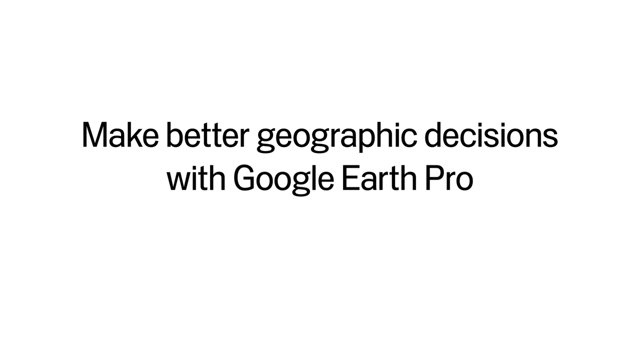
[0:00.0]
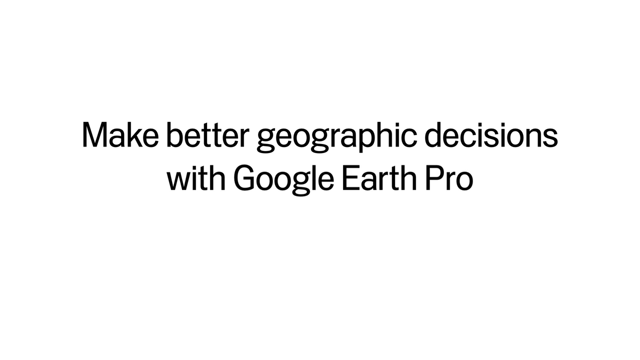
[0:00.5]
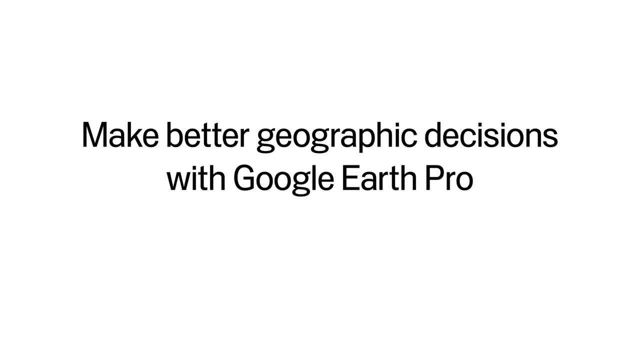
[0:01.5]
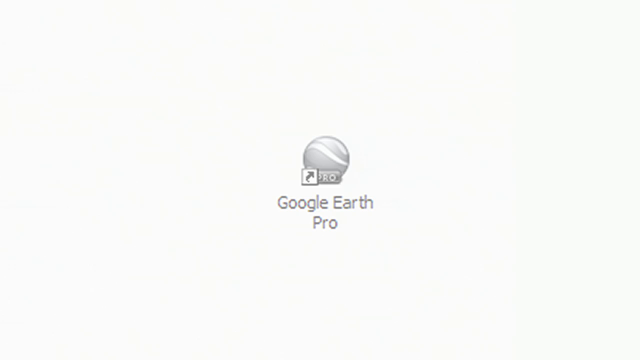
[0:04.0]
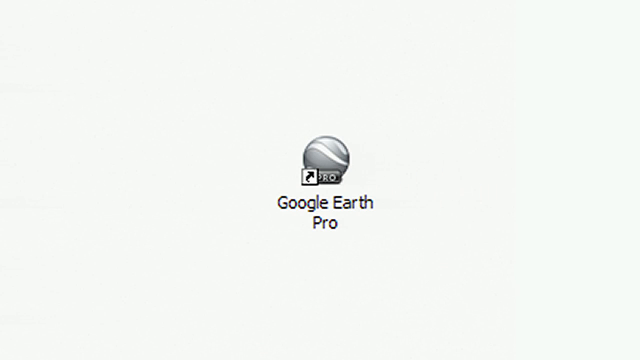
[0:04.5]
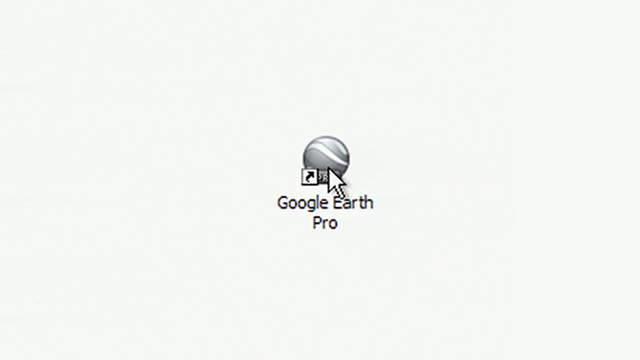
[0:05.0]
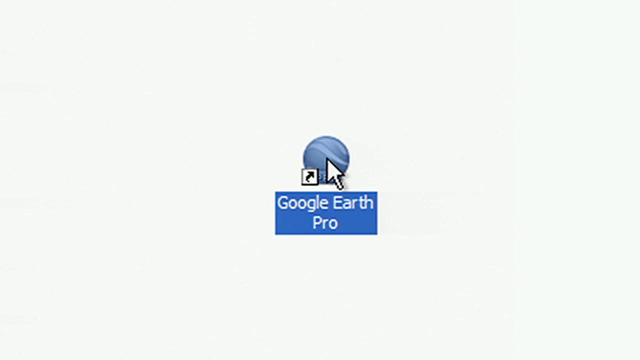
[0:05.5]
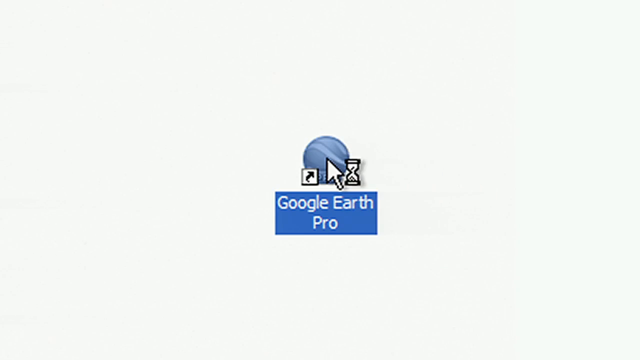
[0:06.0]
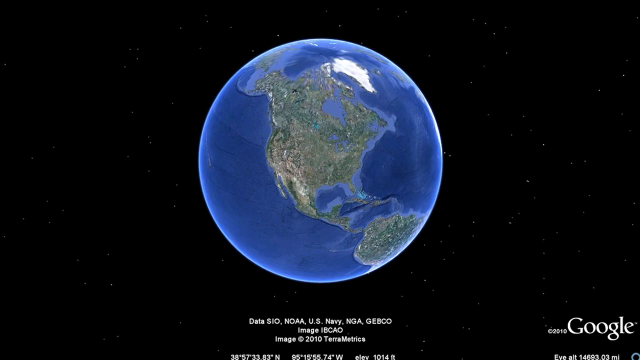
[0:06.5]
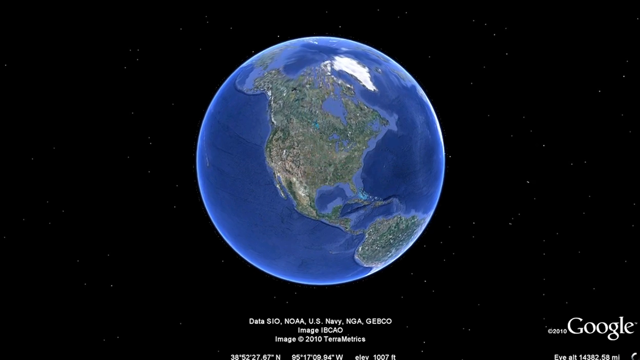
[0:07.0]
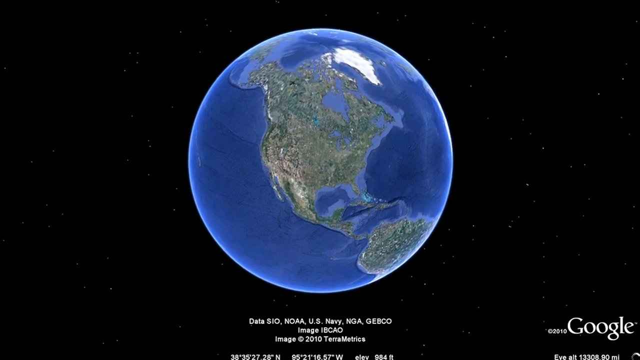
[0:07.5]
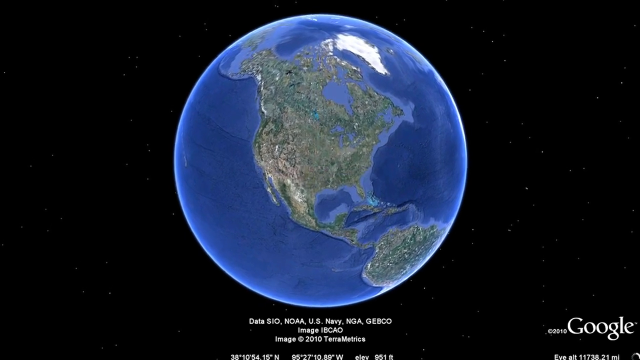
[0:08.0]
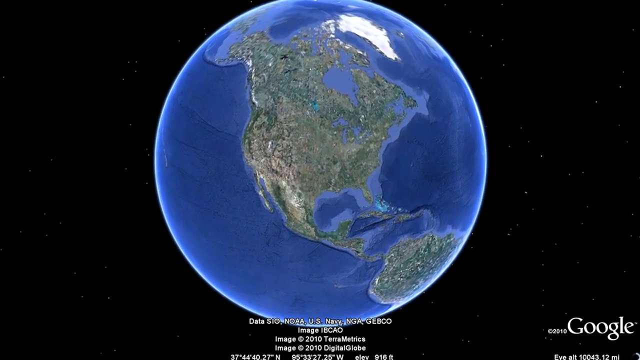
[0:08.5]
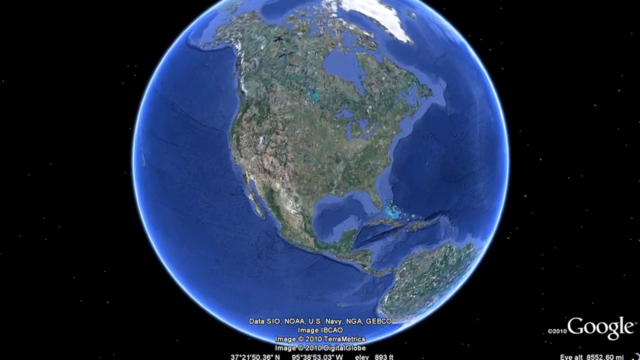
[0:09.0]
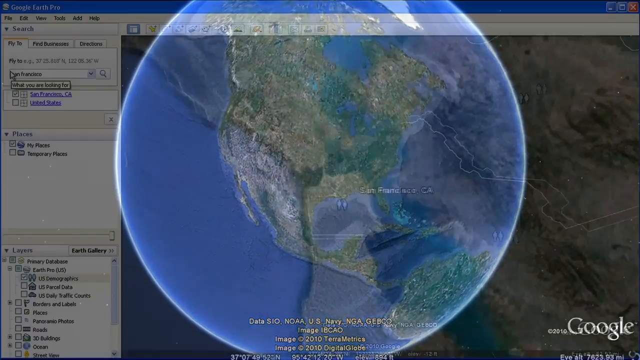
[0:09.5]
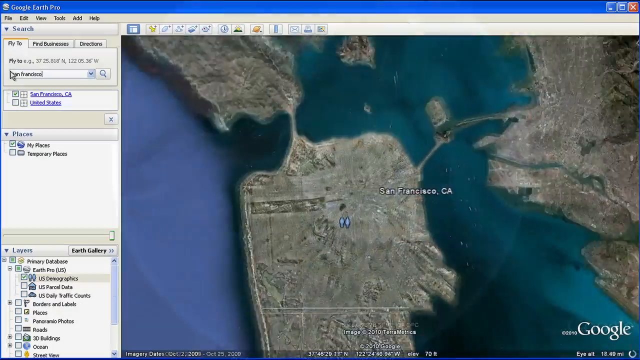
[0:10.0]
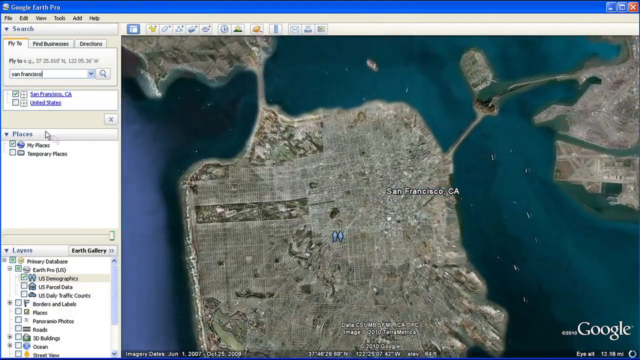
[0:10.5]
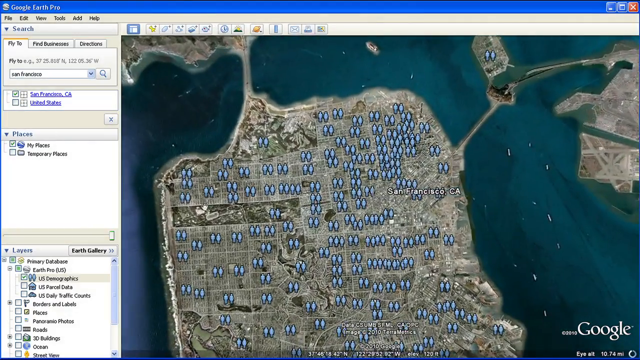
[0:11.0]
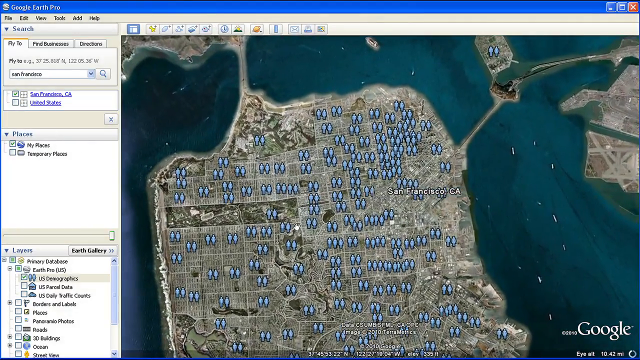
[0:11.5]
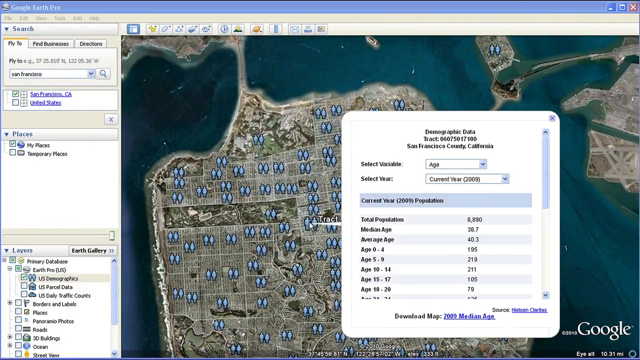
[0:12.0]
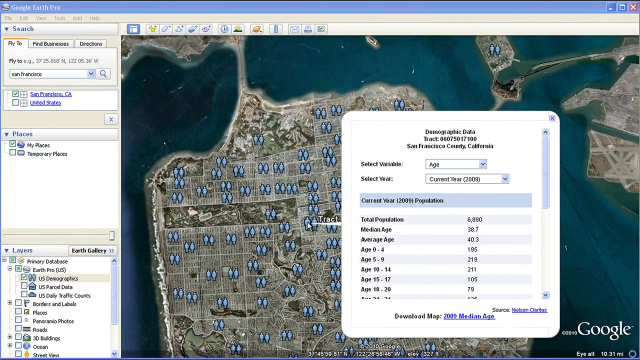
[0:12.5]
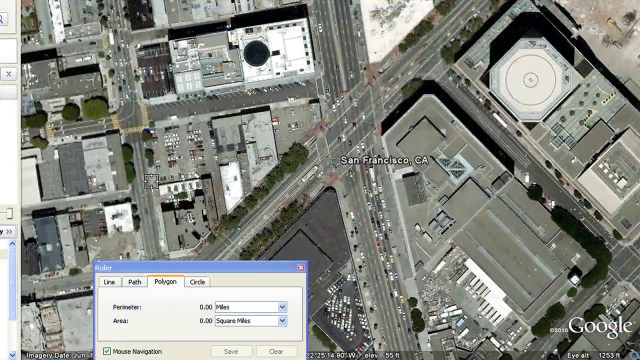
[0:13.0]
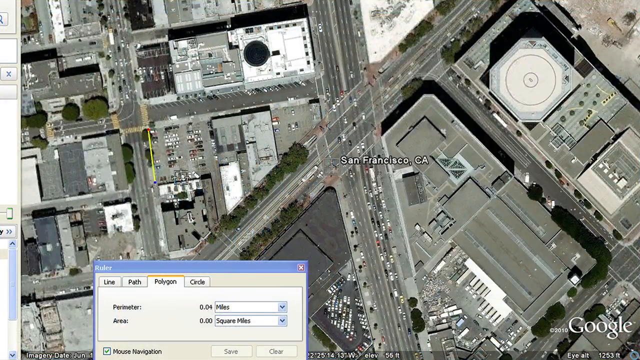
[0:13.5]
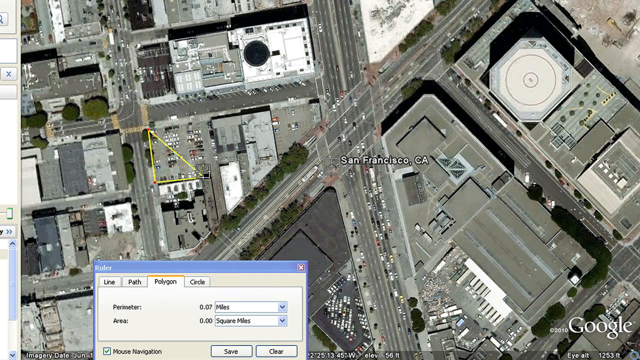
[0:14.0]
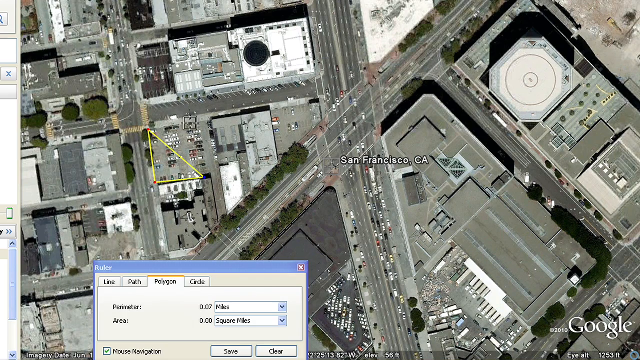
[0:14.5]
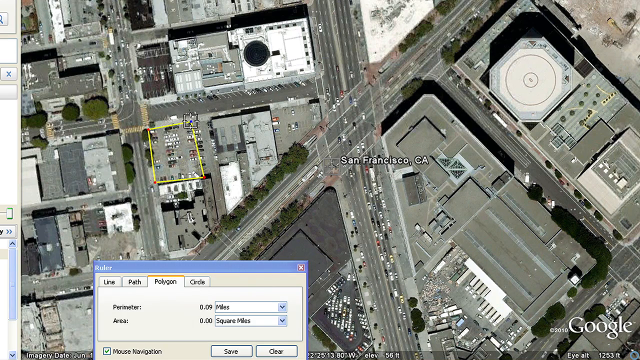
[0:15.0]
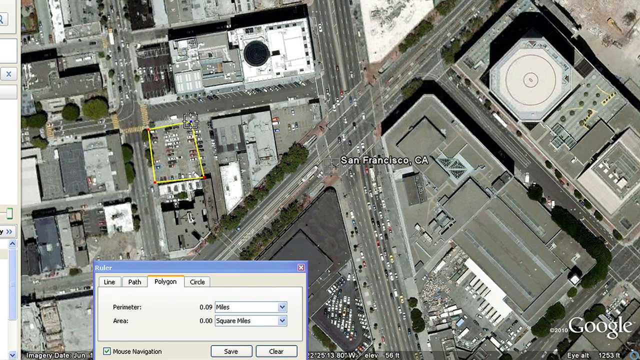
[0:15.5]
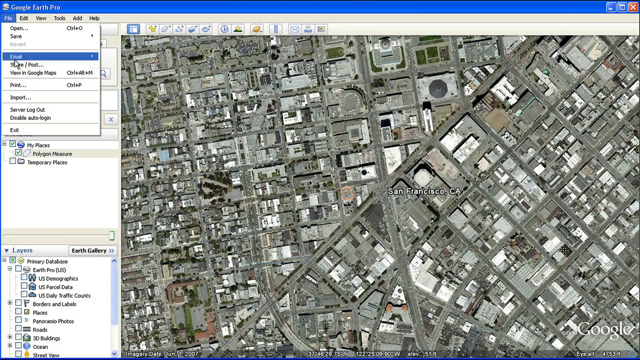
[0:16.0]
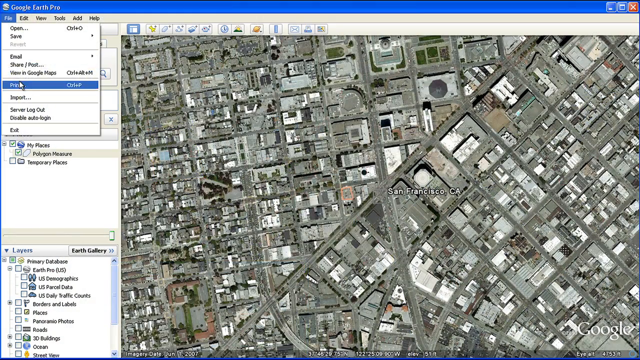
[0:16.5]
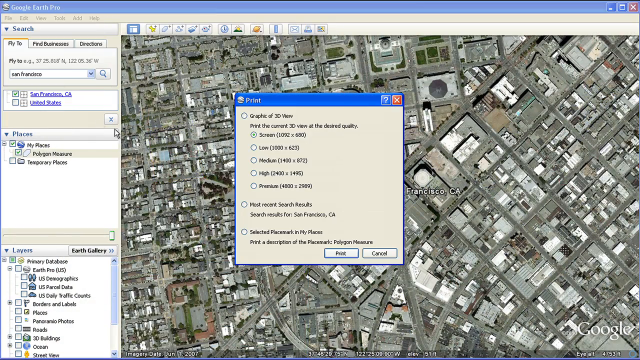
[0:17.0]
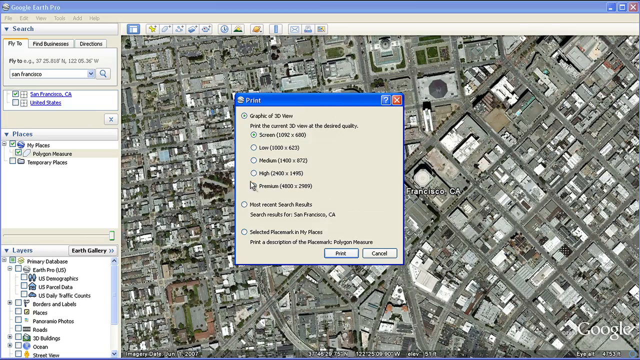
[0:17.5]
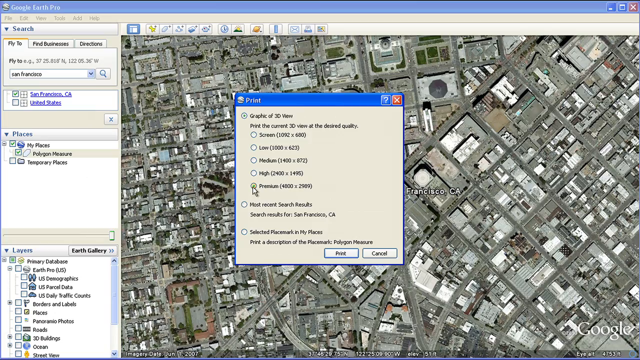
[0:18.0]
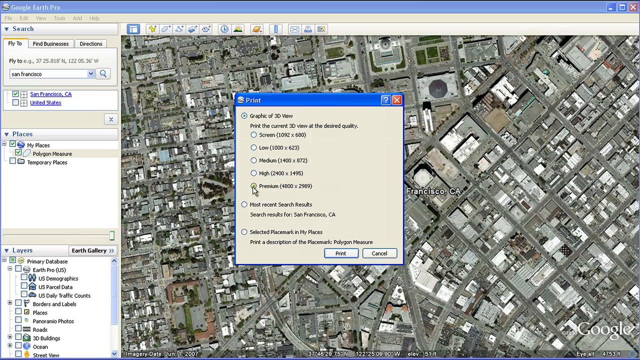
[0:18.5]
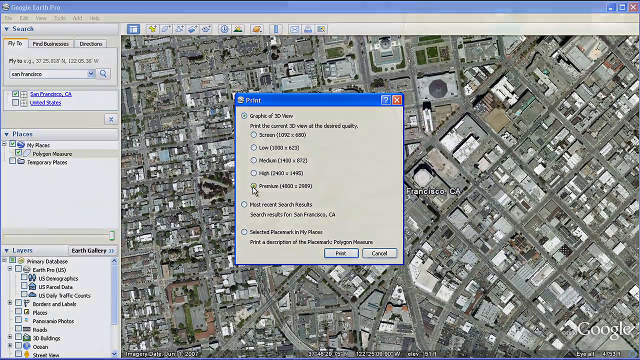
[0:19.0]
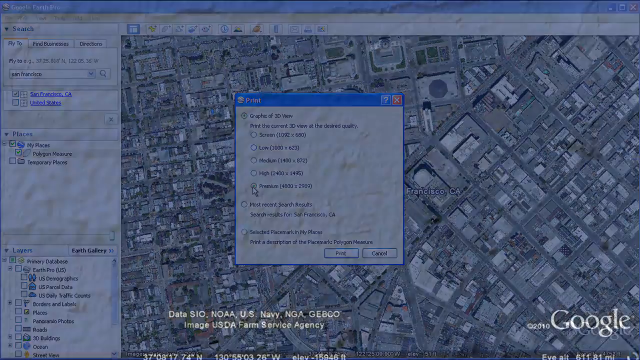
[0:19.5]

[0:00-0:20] The video opens on a white background with black text in the middle that reads "Make Better Geographic Decisions with Google Earth Pro." This screen stays for a few seconds before the next shot, which shows a desktop-style application icon on a white background labeled "Google Earth Pro." A cursor comes in from off screen at the bottom and double-clicks the icon, which highlights in blue, and the cursor shows that it is loading. A black screen with the Earth in the middle appears, and the view zooms in; at the bottom right it says "Google," and there is some information along the bottom, apparently small data points. Next, Google Earth Pro appears in an application window on Windows XP. The main area of the application shows a map with an overhead view of San Francisco, California, with points all over the city indicated by two blue stick figures. A white pop-up with data appears, showing demographic data for San Francisco, California; it allows selecting by a variable, currently set to age, and the year selected is 2009. It lists data points such as age and total population. The next shot shows a closer view of San Francisco with a dialog box called Ruler open. It has four tabs, line, path, polygon and circle; the polygon tab is selected, with options to change the perimeter and the area. The window is then shown fully maximized again, the File tab in the top navigation bar is selected, and the Print option is clicked, offering graphic of 3D view, most recent search results, or selected placemark in my places. Graphic of 3D view is selected and a premium print is chosen.